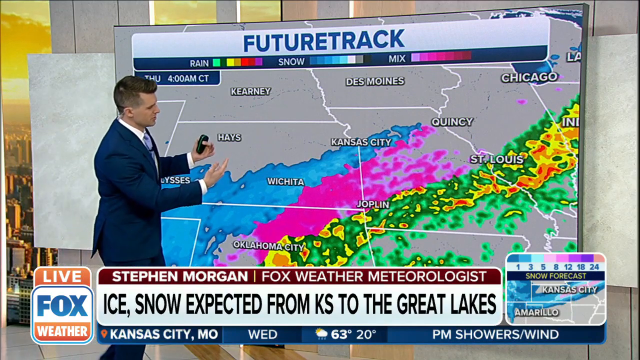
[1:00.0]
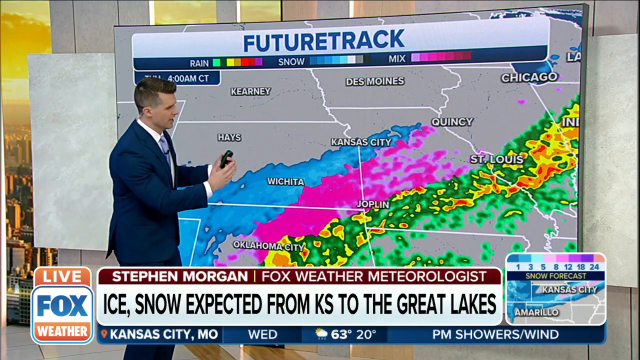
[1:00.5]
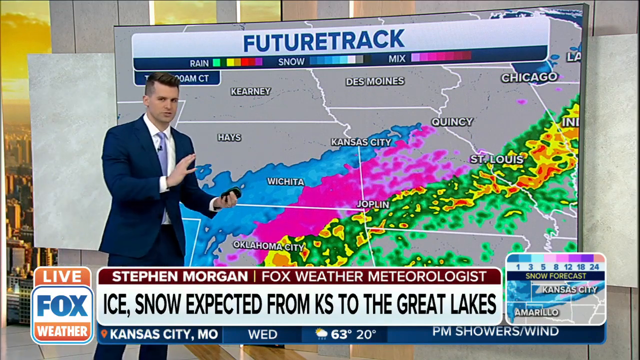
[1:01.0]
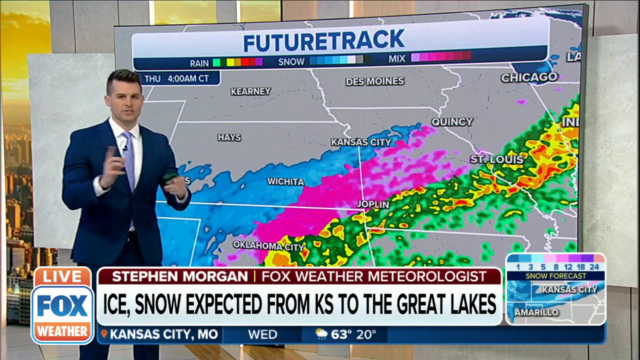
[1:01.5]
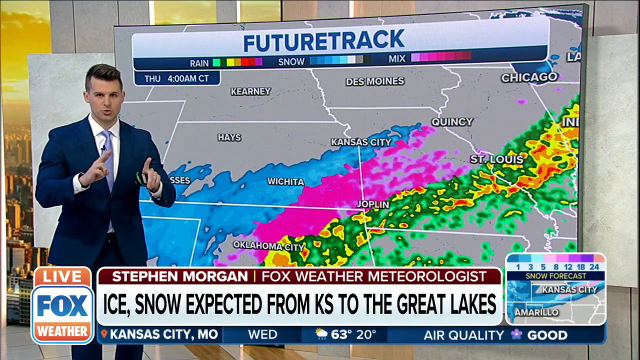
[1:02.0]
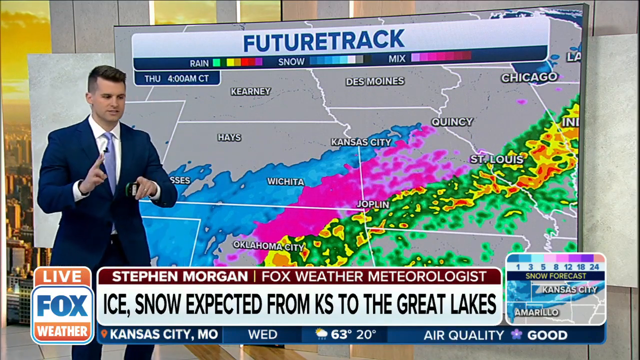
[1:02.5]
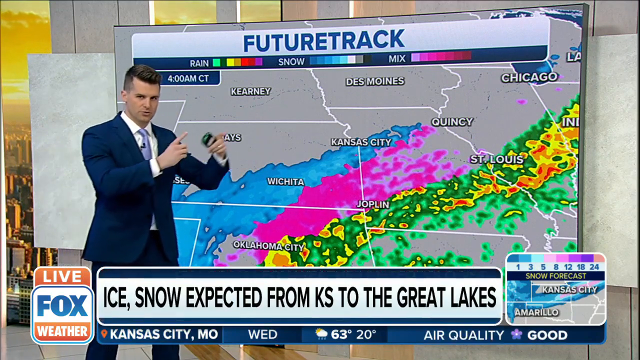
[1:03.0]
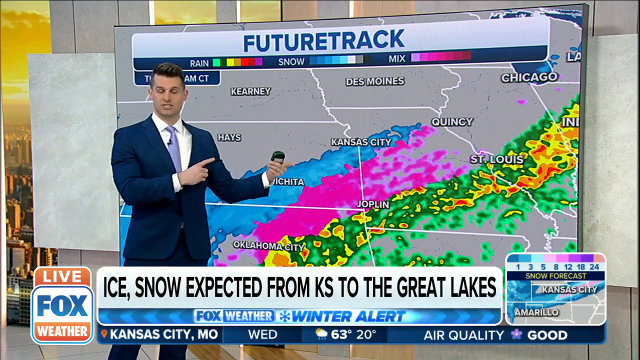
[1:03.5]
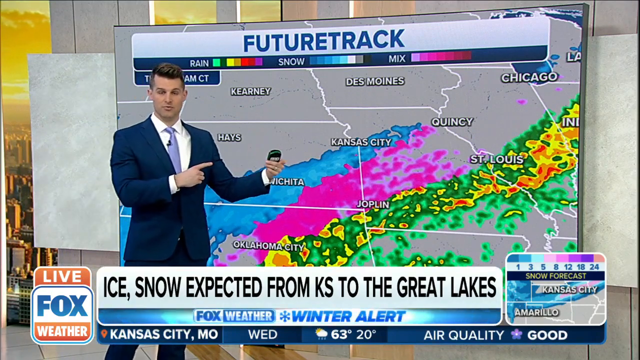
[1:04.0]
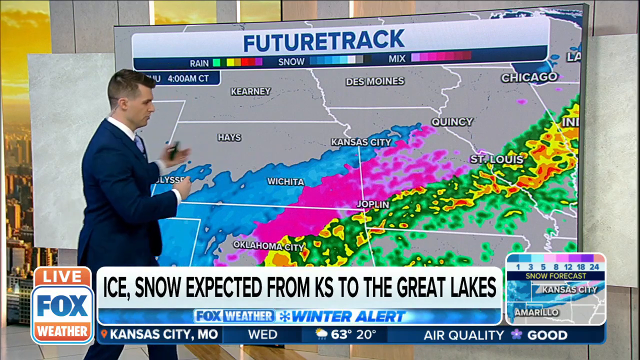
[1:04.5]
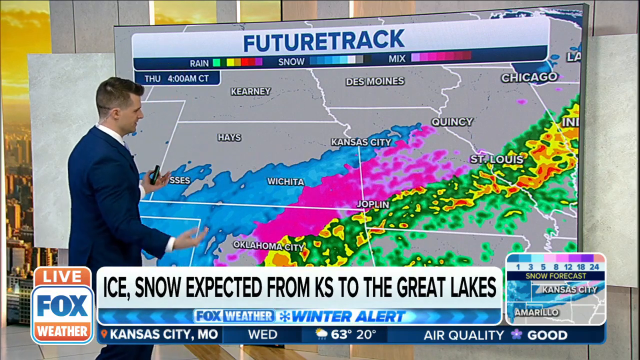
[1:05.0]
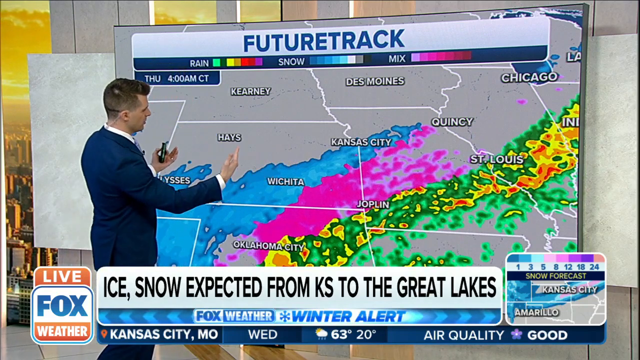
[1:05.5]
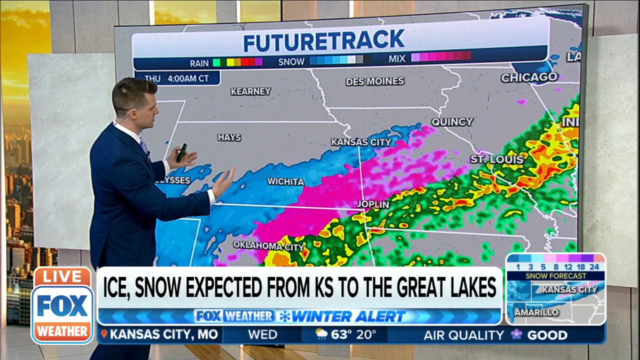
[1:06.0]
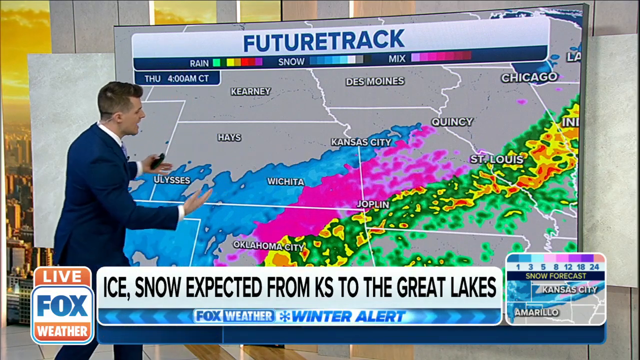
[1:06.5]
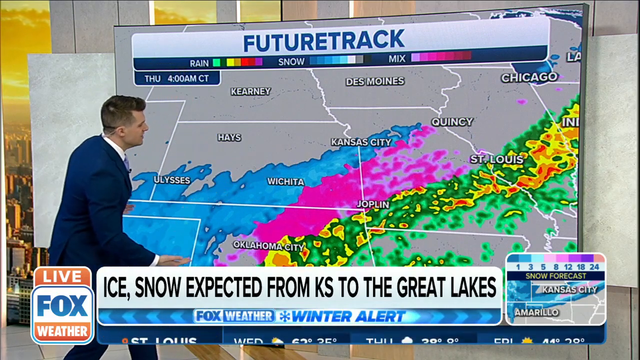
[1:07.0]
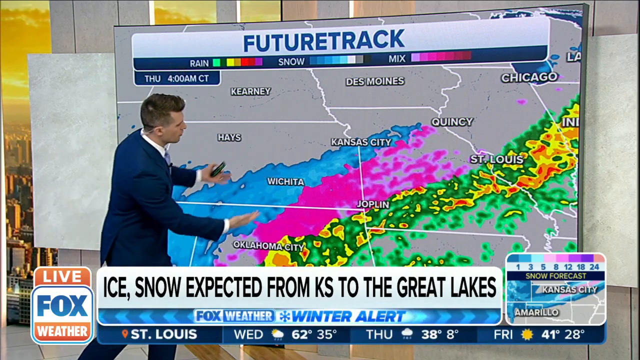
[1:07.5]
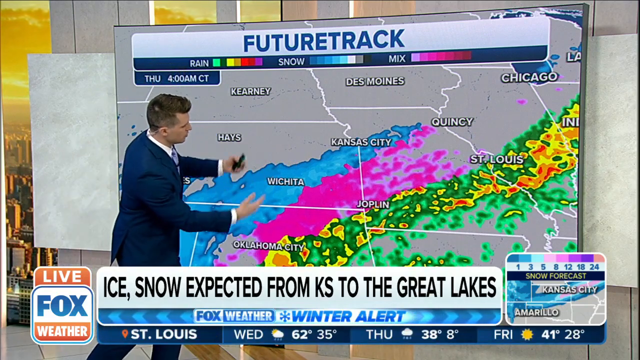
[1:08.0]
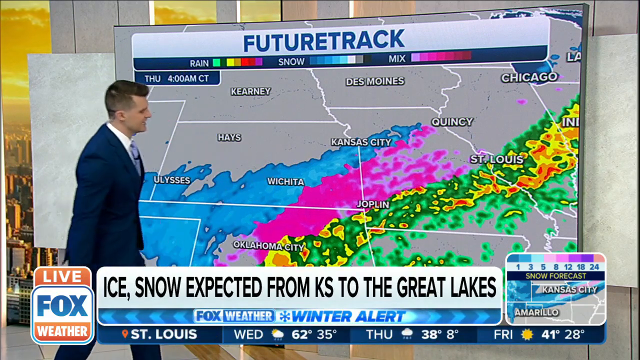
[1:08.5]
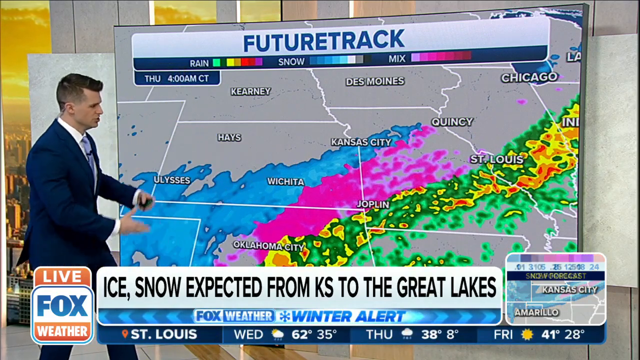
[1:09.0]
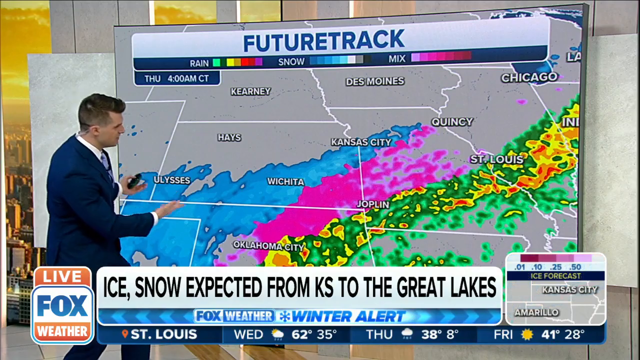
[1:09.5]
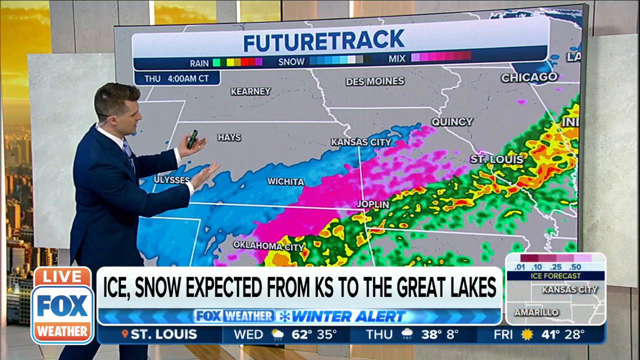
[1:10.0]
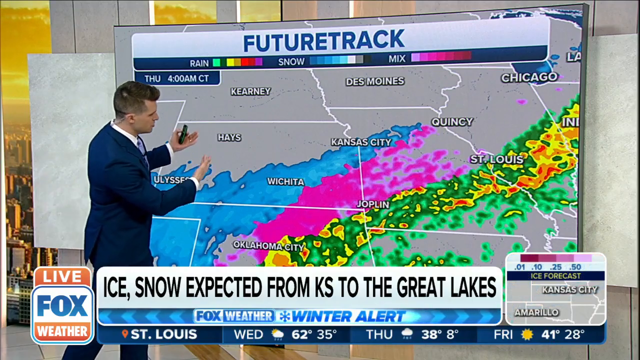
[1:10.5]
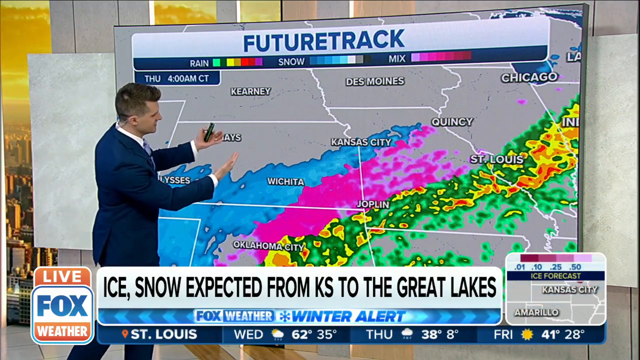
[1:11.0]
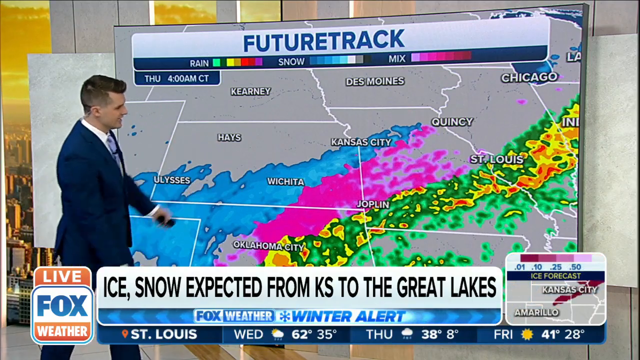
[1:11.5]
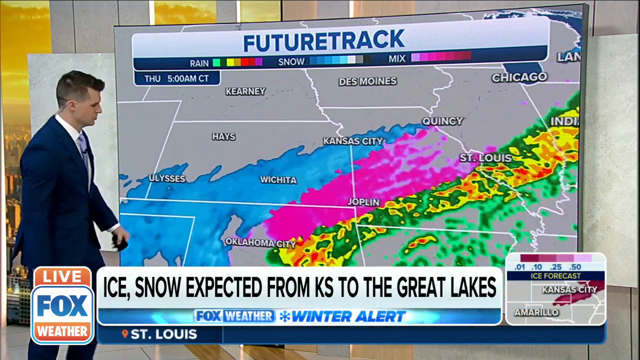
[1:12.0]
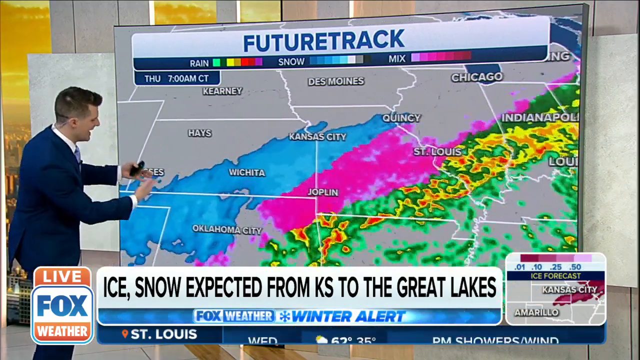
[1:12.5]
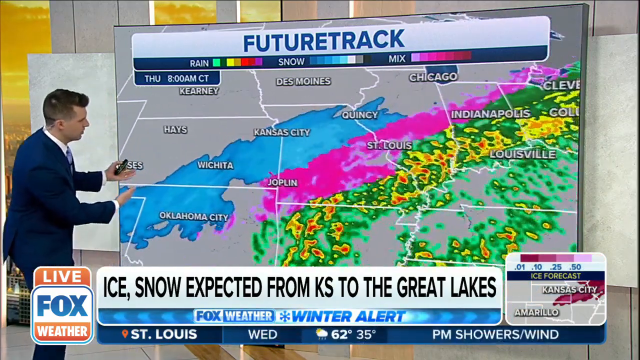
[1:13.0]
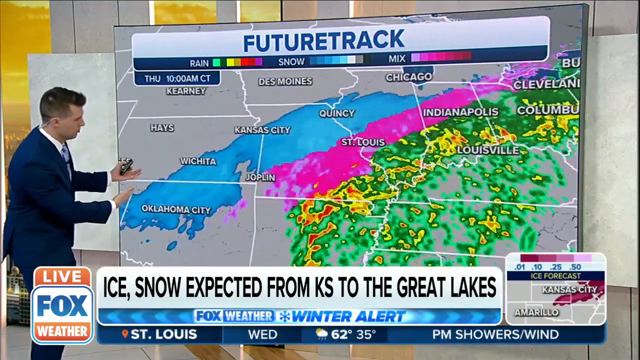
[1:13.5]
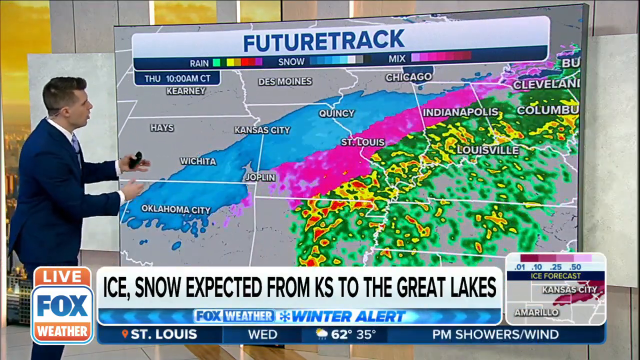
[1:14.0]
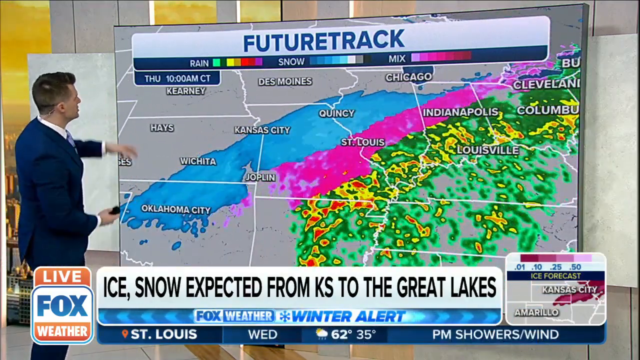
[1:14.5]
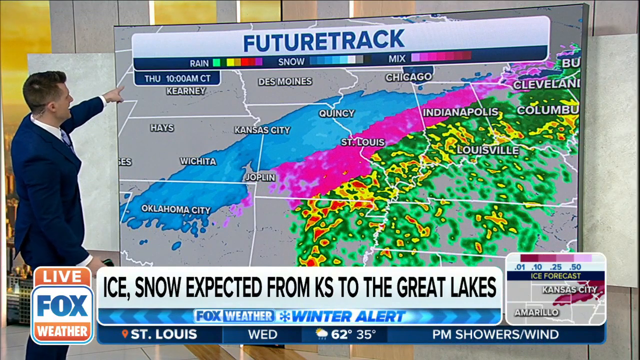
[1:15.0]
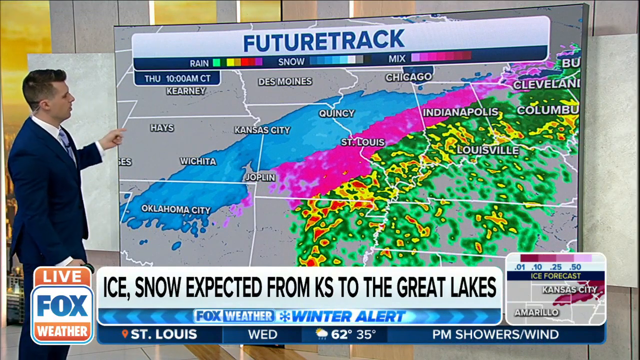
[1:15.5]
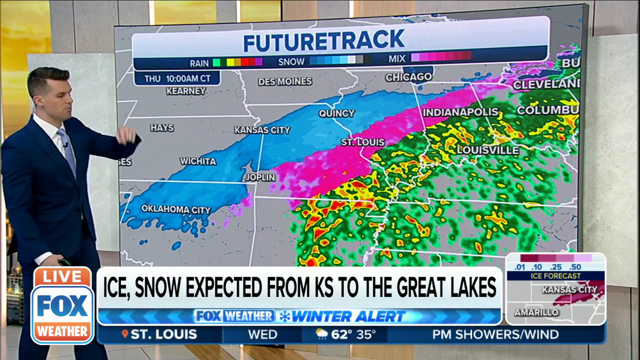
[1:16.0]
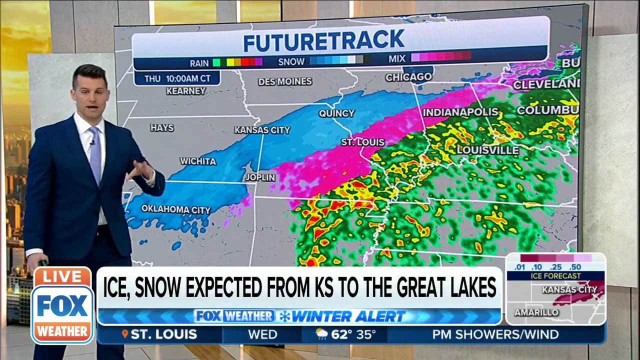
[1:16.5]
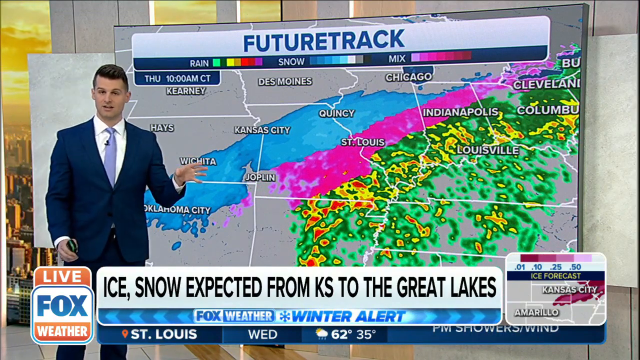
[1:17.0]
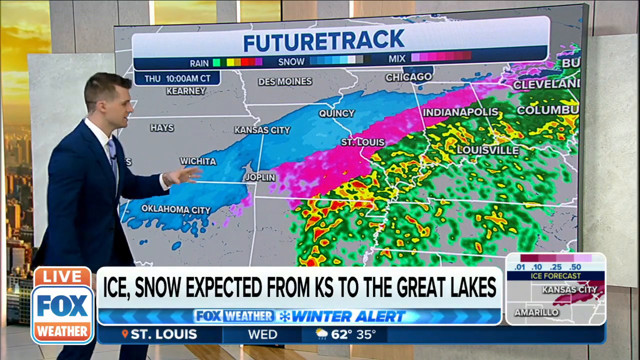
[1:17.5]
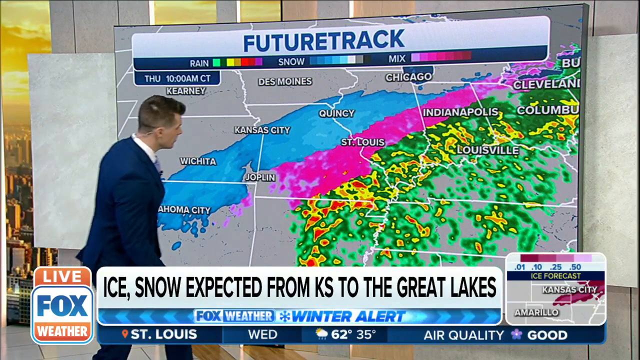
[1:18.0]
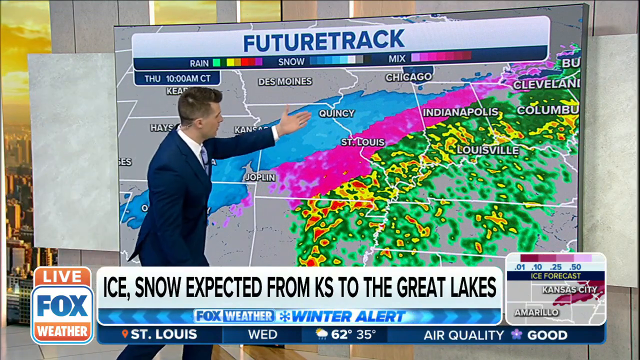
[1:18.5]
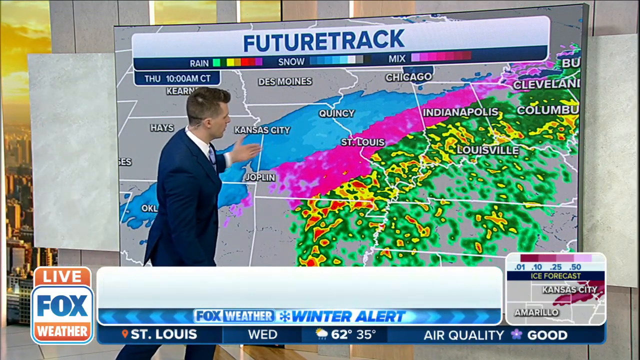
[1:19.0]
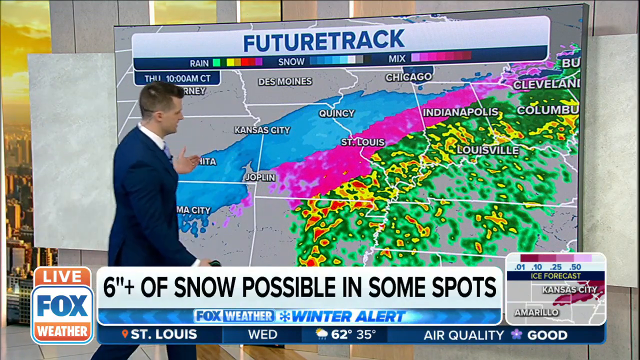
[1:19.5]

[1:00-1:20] The meteorologist stands in front of the board, pointing out the wintry precipitation mix over Kansas and indicating the storm's direction from western Oklahoma northeast into Kansas. A second or two later, the storm moves further east into Missouri, Indiana, Ohio, and the rest of the eastern half of the country, while the meteorologist points with his hands. Most of Kansas appears to have snow mixed with rain, with a snowy mix especially east of Wichita in the southeast corner of the state. From central Oklahoma around Oklahoma City, a snow mix extends northeast into Kansas and into Missouri, passing through Joplin and east of Kansas City and covering the majority of Missouri. The ice and snow mixture extends from Kansas to the Great Lakes. The map is labeled for Thursday, 4 a.m. Central Standard Time.